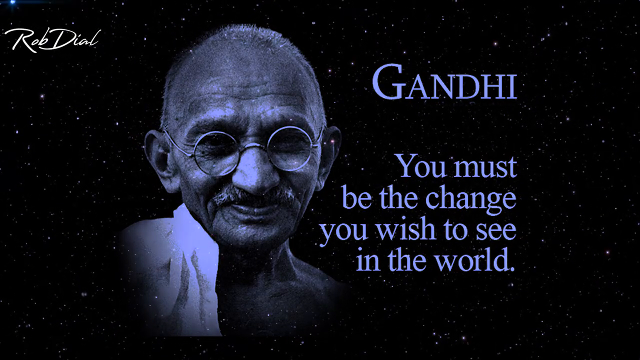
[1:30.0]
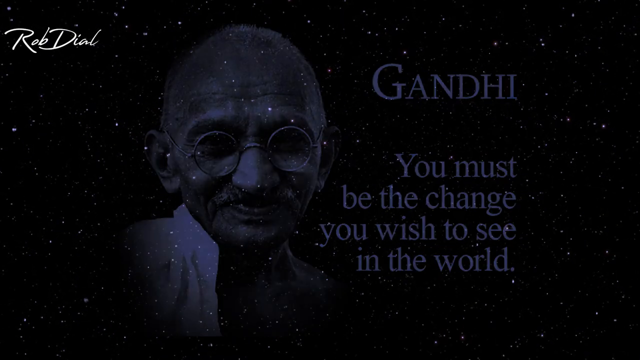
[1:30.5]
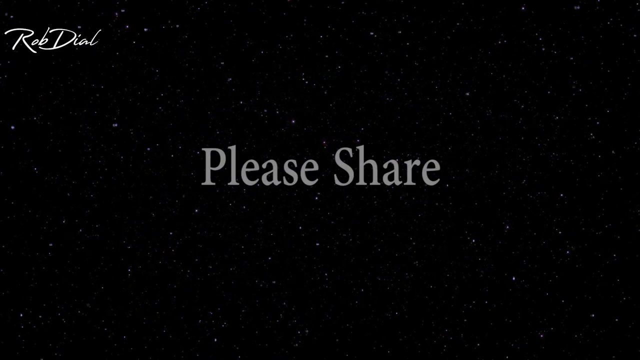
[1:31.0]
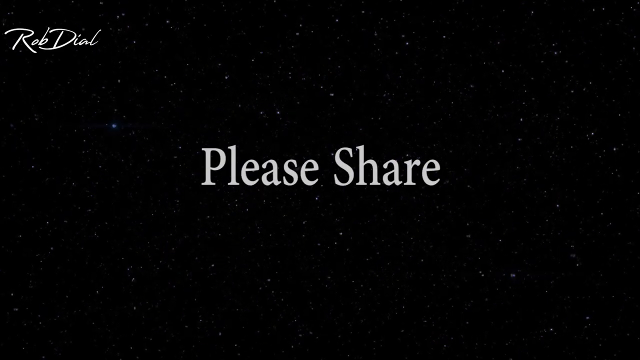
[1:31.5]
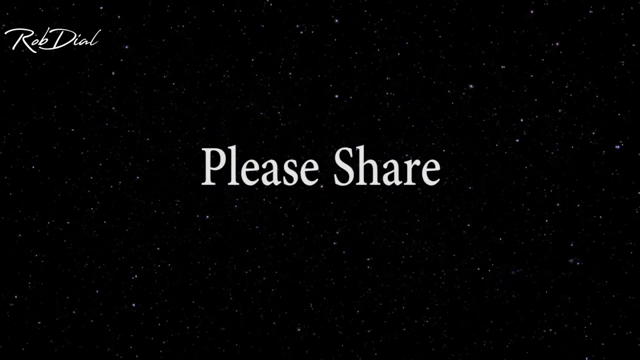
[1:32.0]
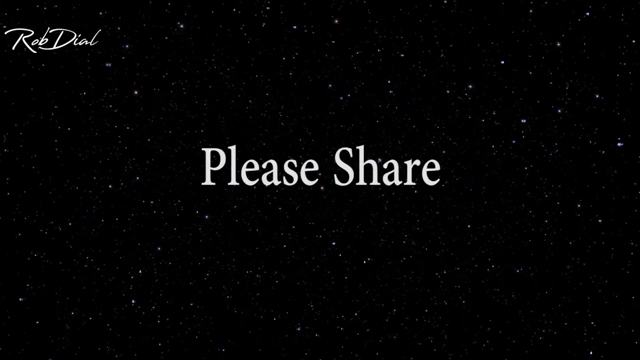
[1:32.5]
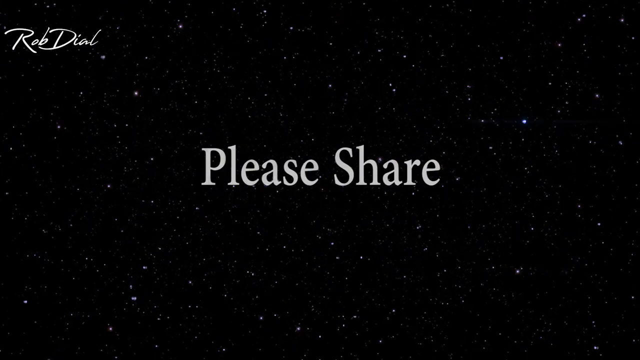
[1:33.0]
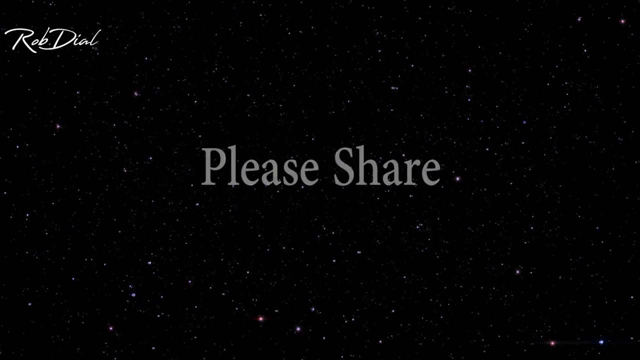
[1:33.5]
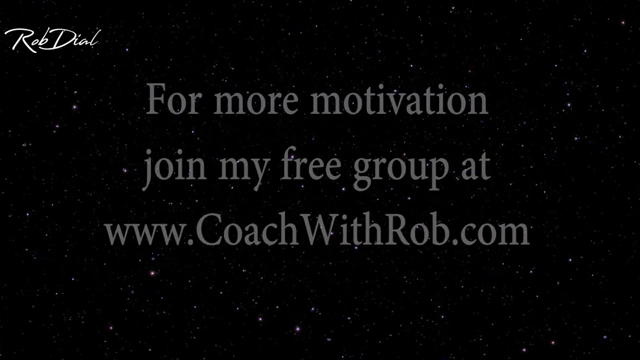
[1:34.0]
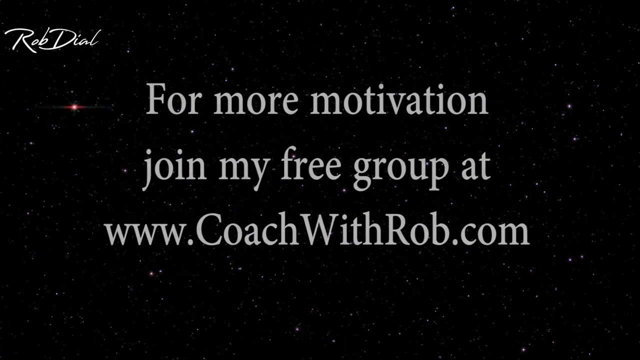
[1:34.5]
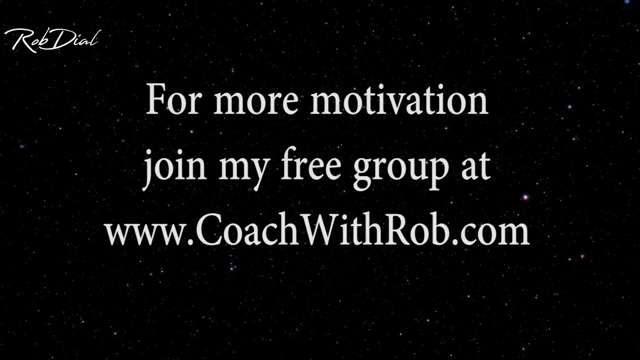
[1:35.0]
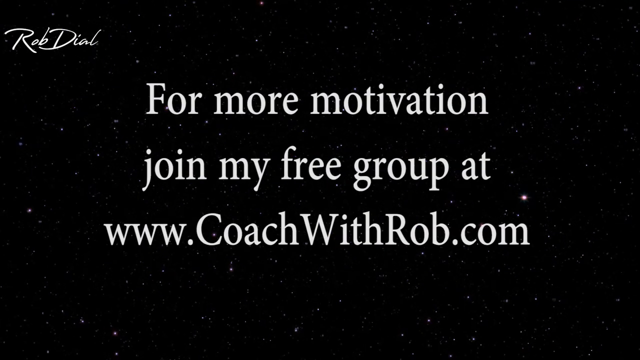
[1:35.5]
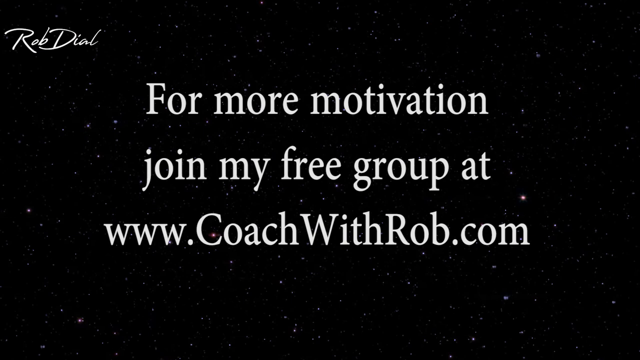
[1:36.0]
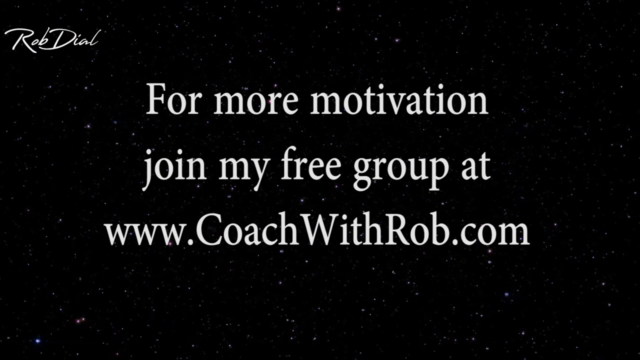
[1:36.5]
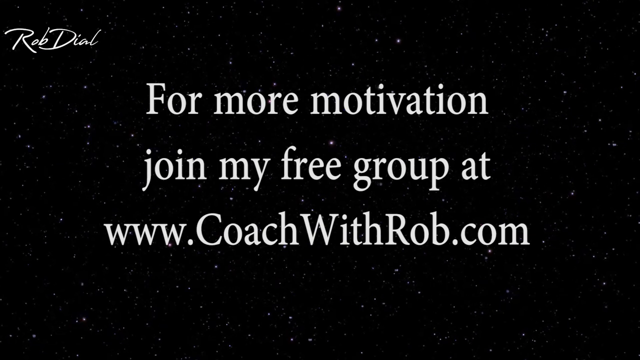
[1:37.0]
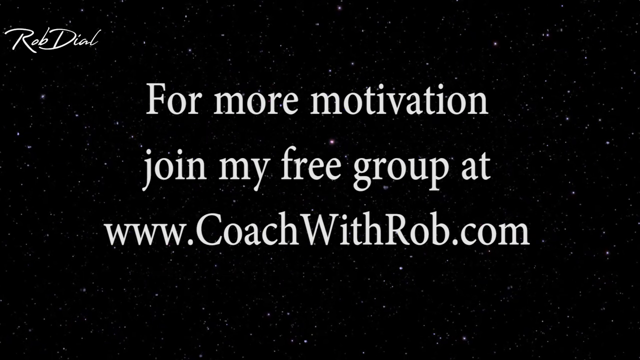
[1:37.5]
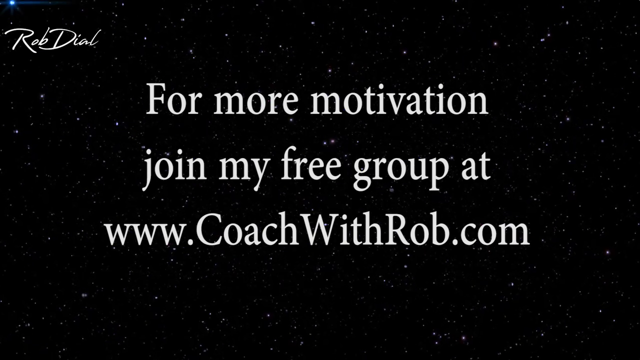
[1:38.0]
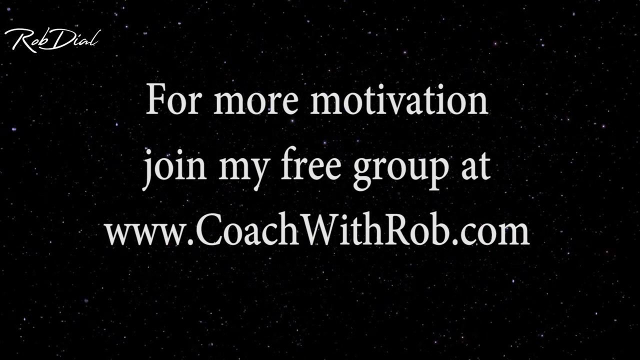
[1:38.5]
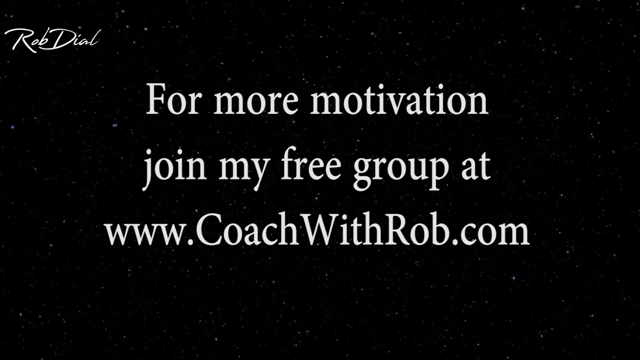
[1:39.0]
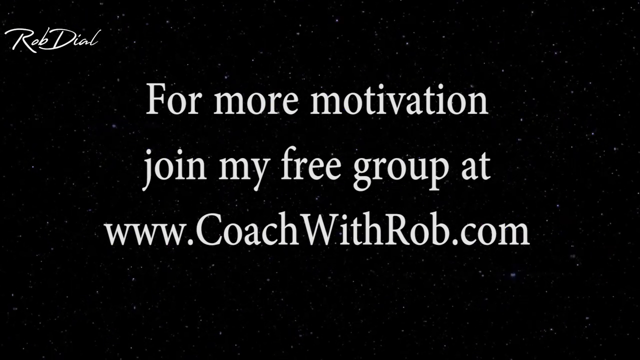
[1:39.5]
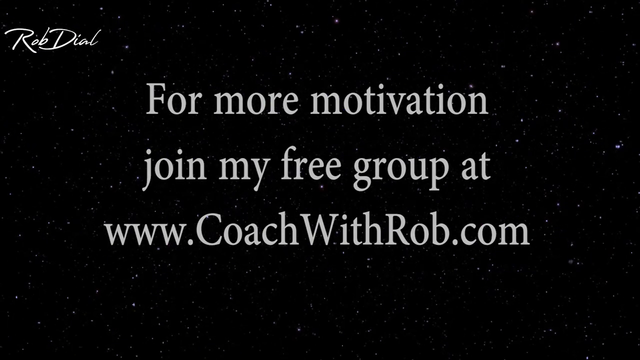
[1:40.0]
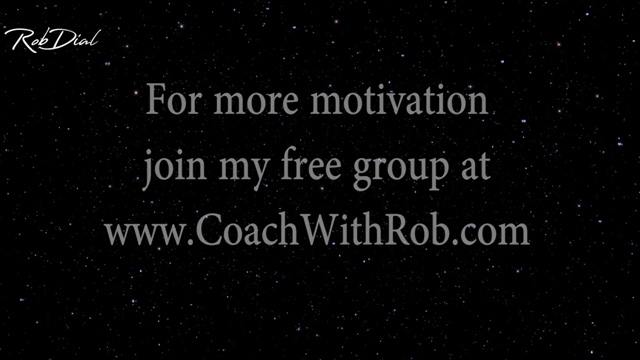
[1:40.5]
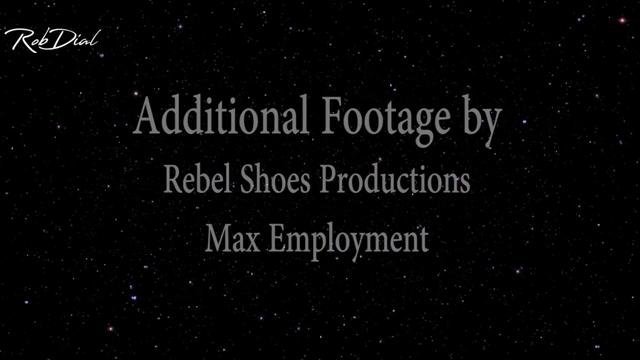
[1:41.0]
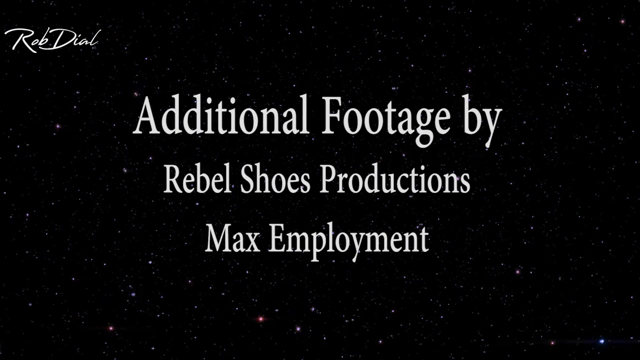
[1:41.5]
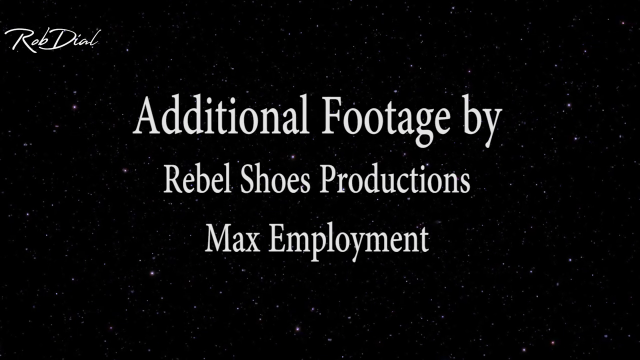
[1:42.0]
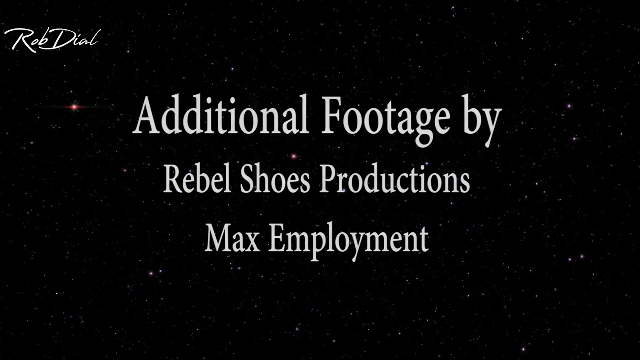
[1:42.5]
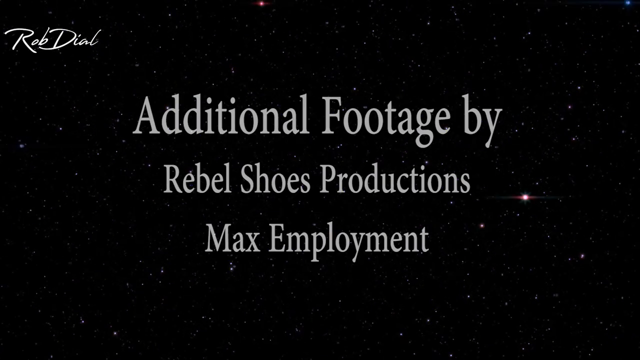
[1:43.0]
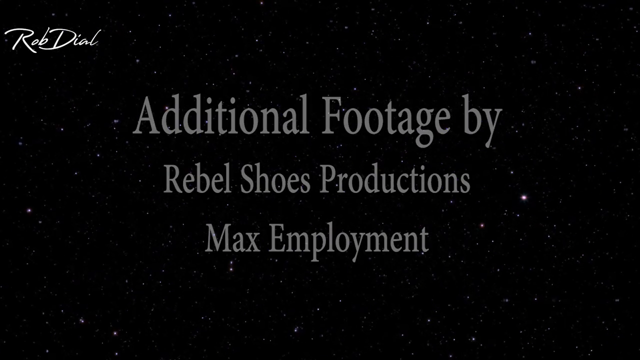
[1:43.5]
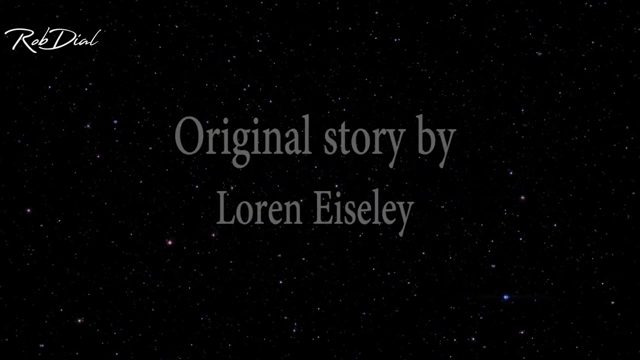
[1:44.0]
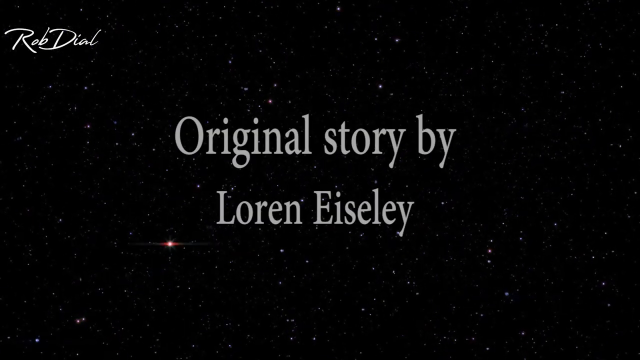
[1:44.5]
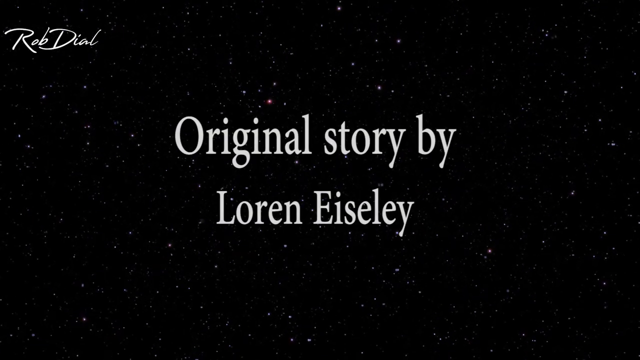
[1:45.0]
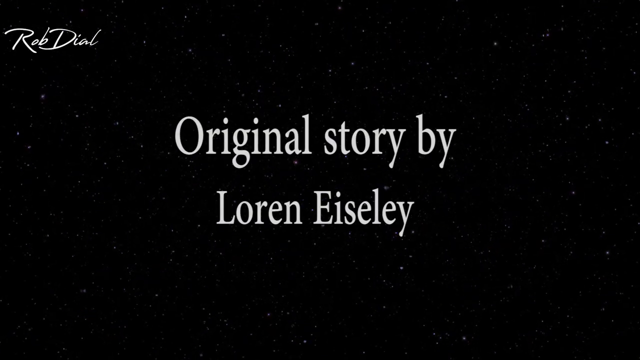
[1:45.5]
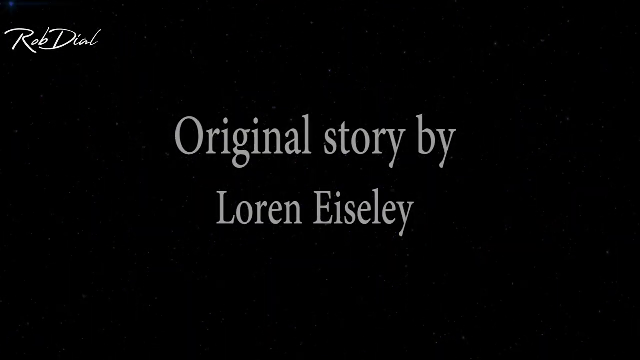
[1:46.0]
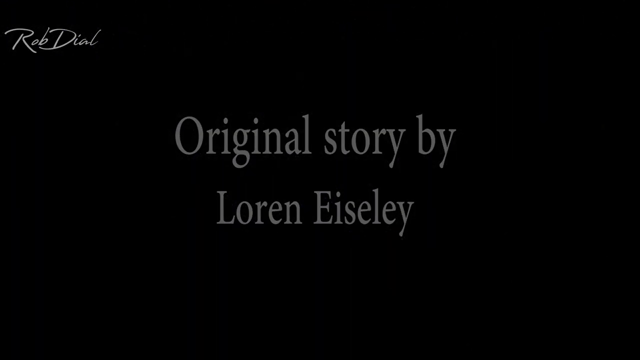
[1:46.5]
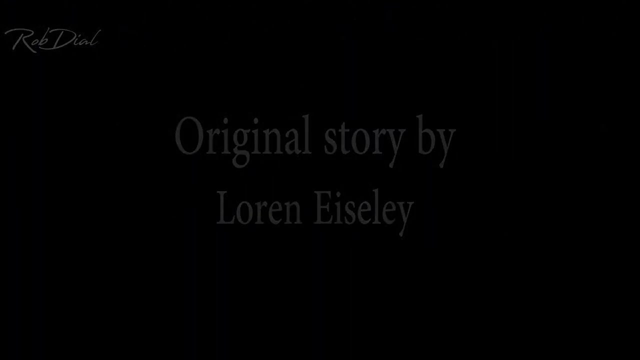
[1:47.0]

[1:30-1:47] A series of phrases appears on screen one after another against a background of a pitch-dark night sky. At the center of the screen are the words "please share", which slowly fade until they disappear completely. They are replaced by "for more motivation Join my free group at www.coachwithrobb.com", arranged in three lines at the center of the screen: "for more motivation" on the first line, "join my free group at" below it, and the web address on the last line. These words disappear and are replaced by "additional footage by Rebel Shoes Productions, Max Employment", also arranged in three lines, with "Additional, Footage by" on the first line in the largest font. These words are then replaced at the center of the screen by "original story by Loren Eiseley".